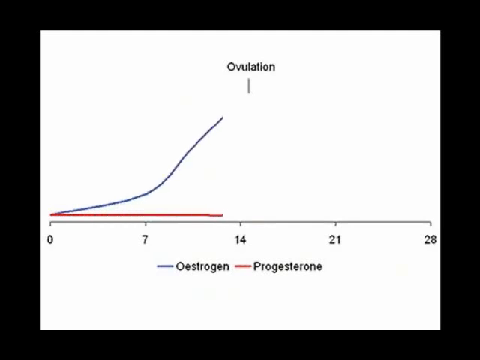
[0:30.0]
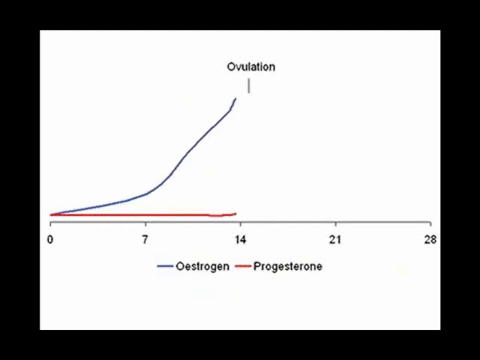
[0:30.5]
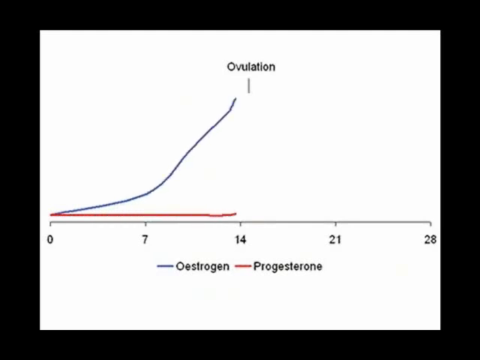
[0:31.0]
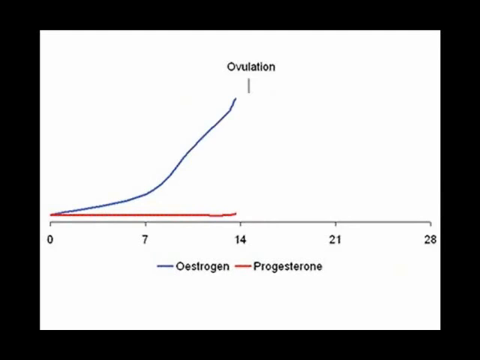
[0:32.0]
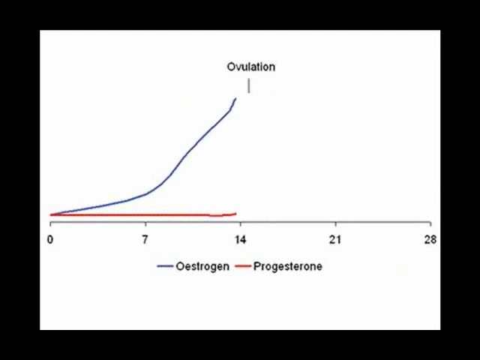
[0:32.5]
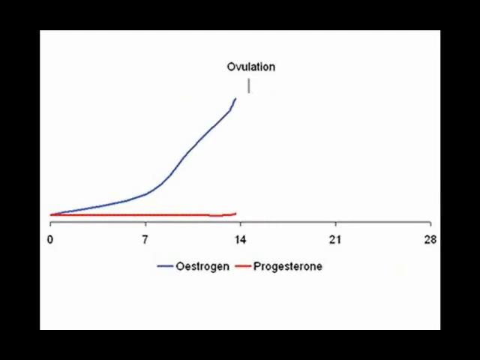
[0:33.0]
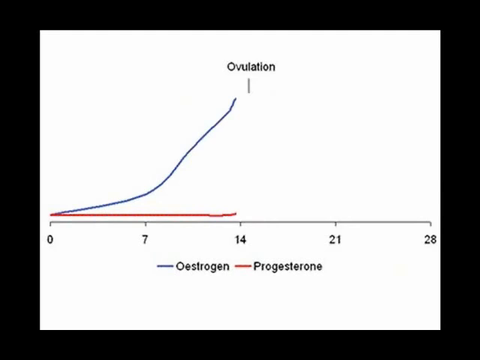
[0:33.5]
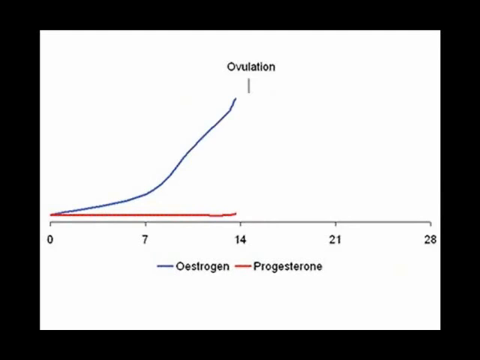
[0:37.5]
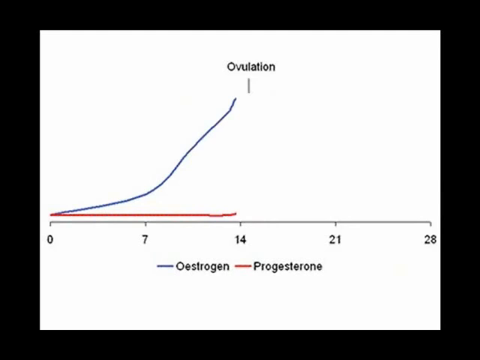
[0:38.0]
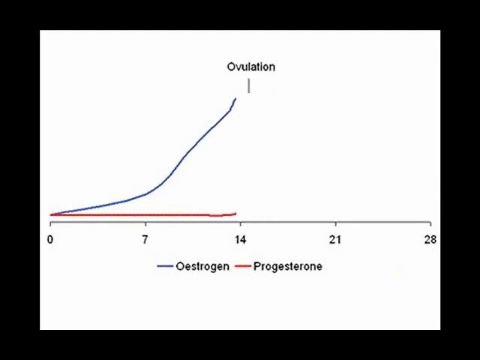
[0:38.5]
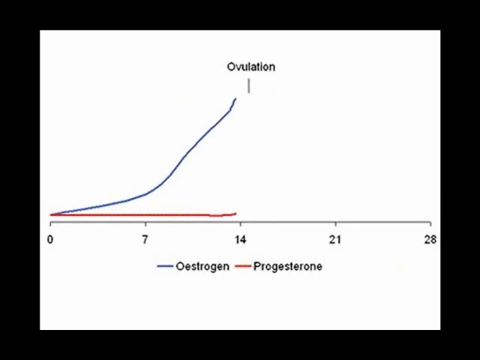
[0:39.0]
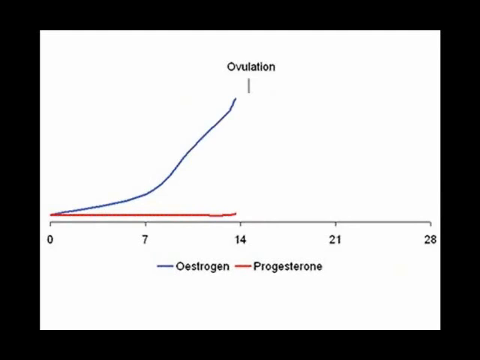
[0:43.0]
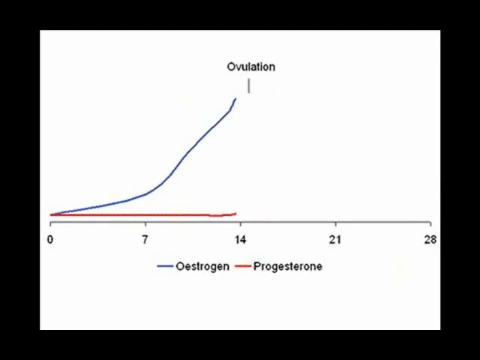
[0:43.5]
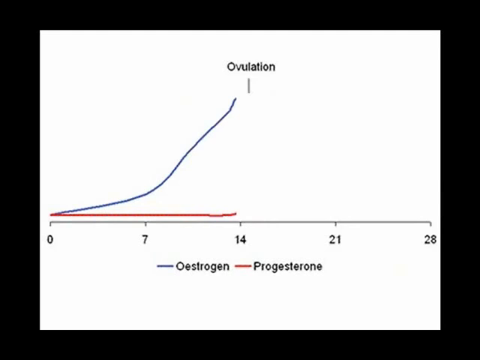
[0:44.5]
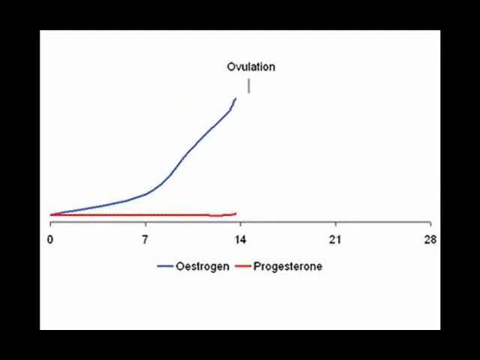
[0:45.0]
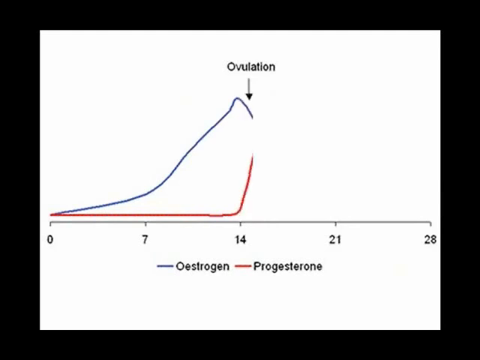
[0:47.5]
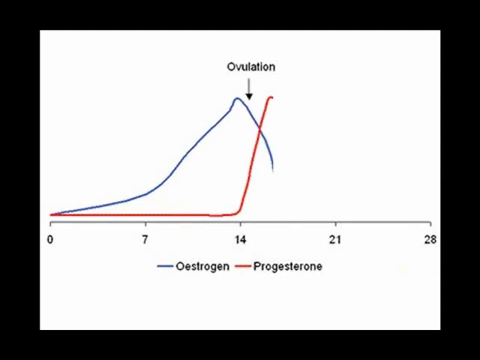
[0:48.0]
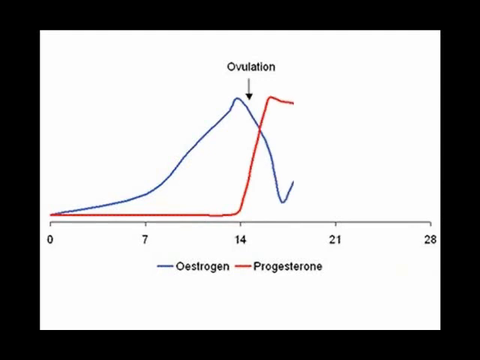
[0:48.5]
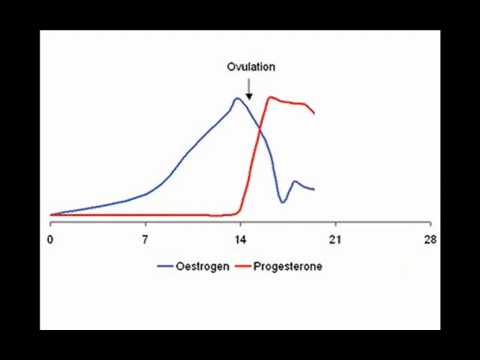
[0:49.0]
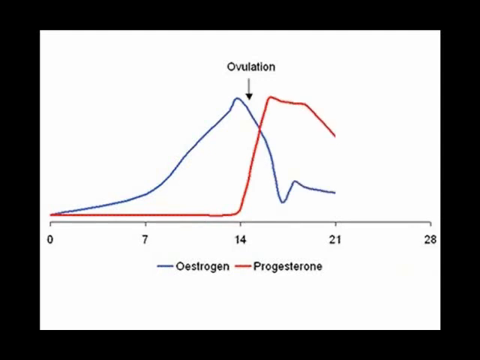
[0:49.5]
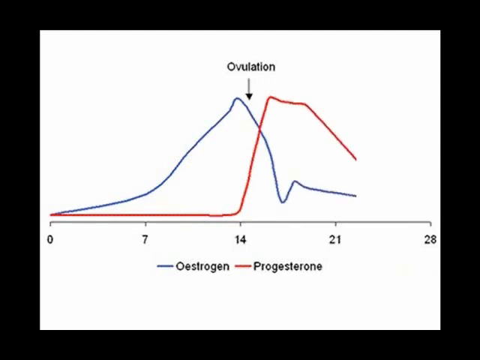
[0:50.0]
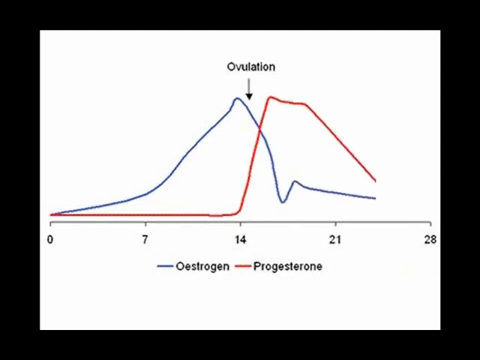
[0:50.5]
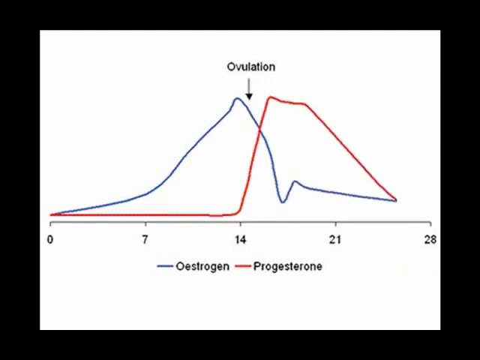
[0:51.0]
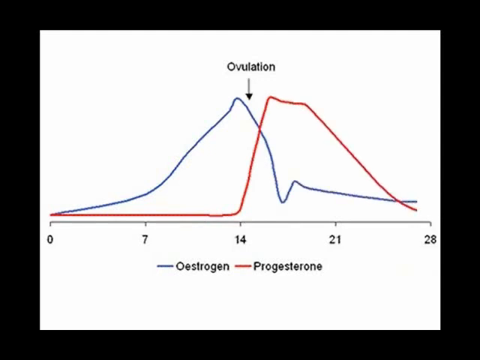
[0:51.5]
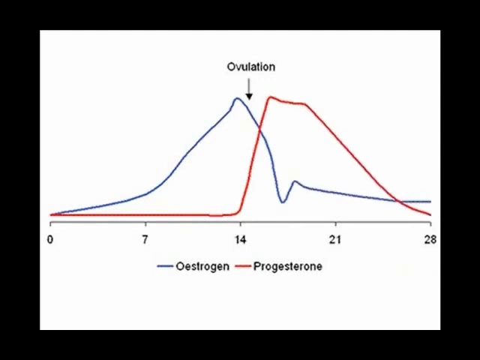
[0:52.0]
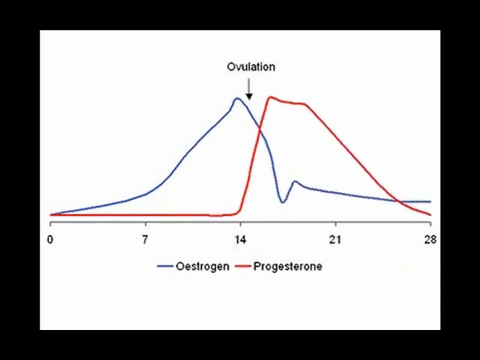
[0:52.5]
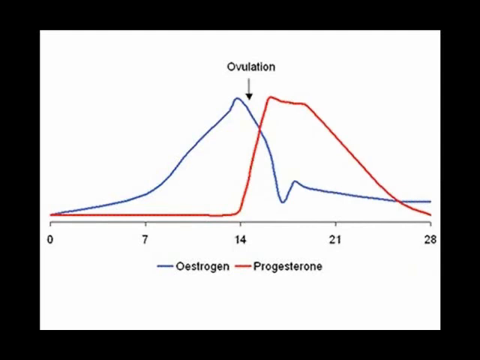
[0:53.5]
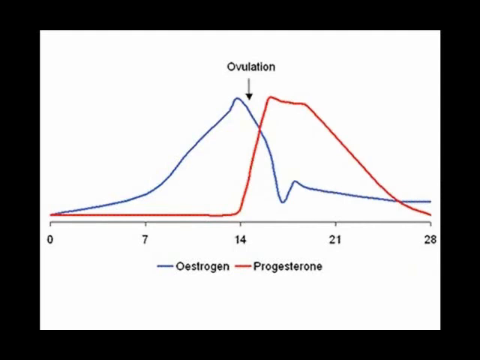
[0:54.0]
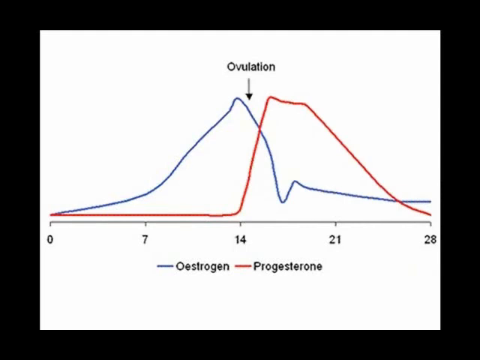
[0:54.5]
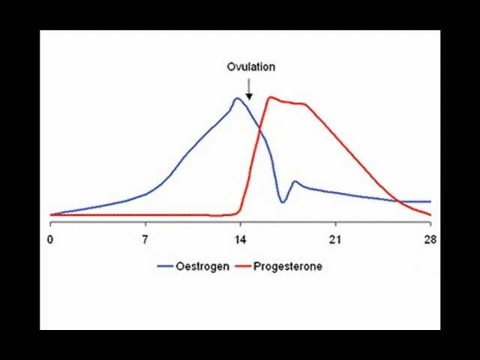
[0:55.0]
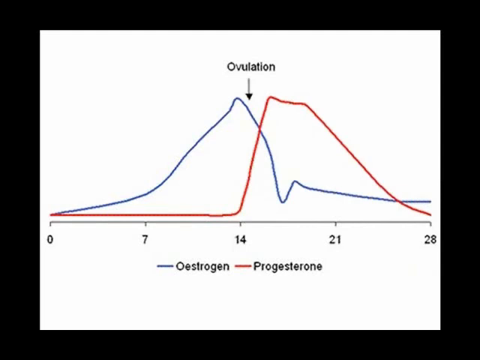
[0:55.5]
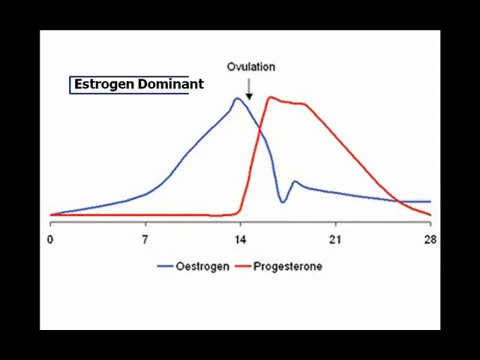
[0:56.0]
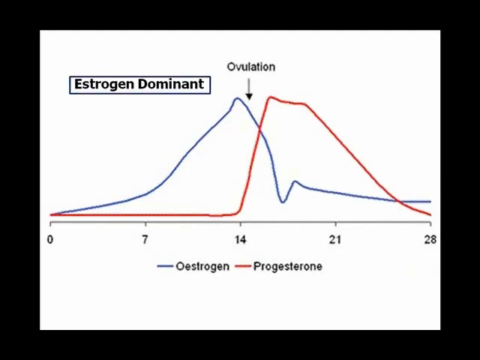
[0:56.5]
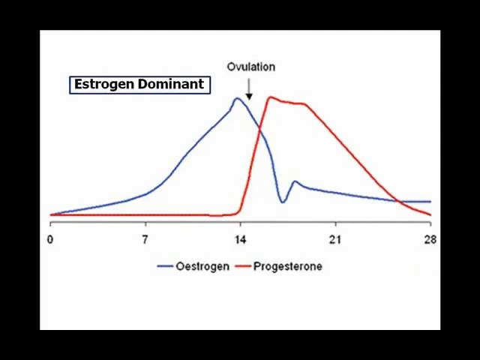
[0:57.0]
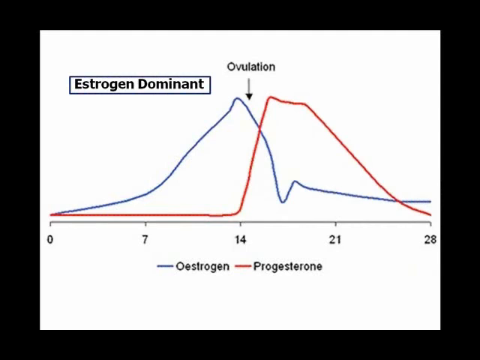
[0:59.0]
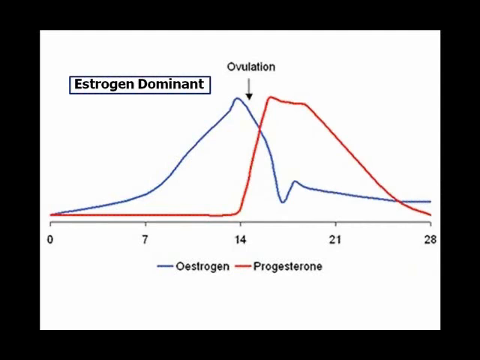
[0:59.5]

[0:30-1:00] Another slide appears. The video screen is outlined by a black frame about three quarters of an inch wide on all four sides, and the frame is wider than it is tall by maybe 2 inches. Inside it is a white slide with the word "ovulation" at the top in black letters. Beneath the word is a short vertical gray line, maybe a quarter of an inch long, with no arrows. About two-thirds of the way down, a similar gray horizontal line runs virtually the entire width of the frame, starting with the number 0 on the left and ending with 28 on the right. Equally spaced markings along it read 0, 7, 14, 21 and 28.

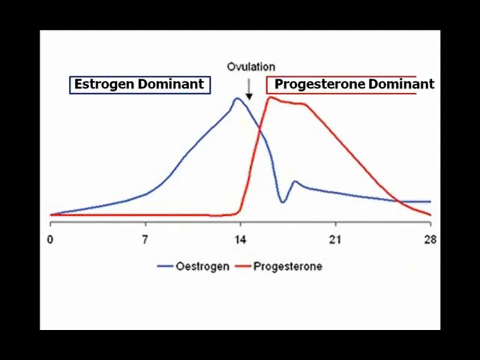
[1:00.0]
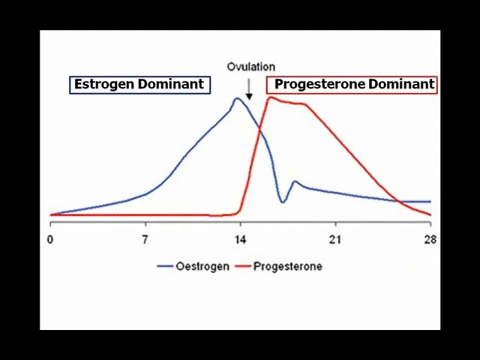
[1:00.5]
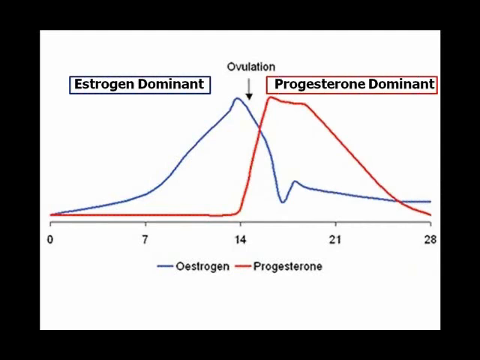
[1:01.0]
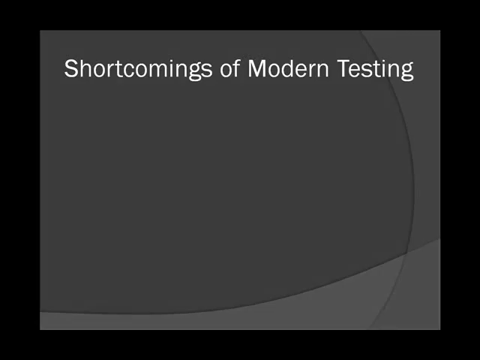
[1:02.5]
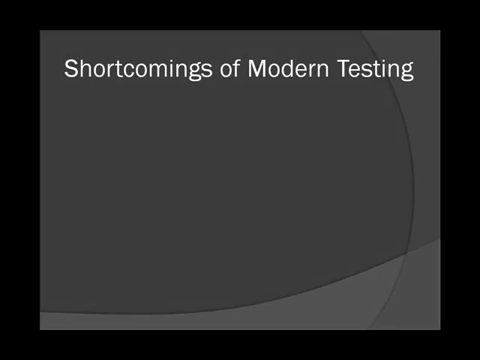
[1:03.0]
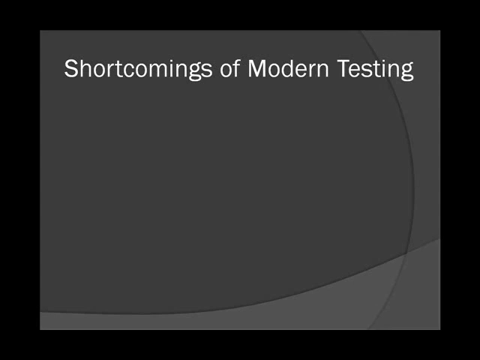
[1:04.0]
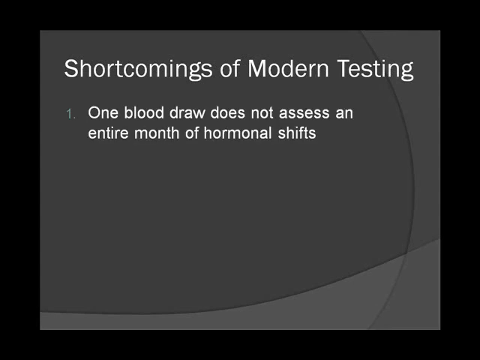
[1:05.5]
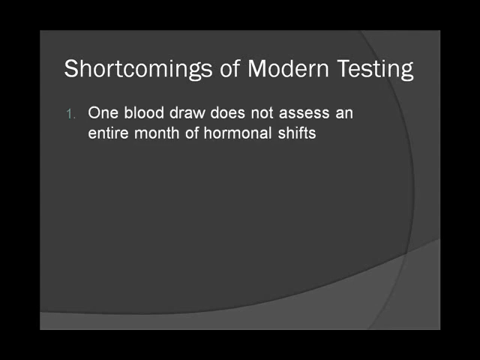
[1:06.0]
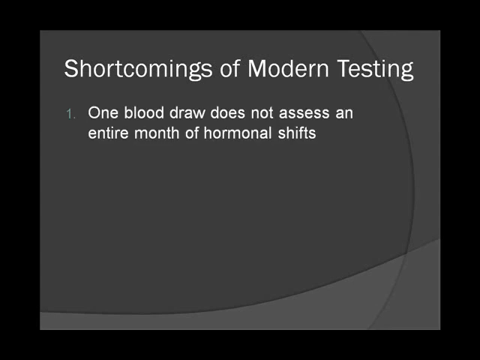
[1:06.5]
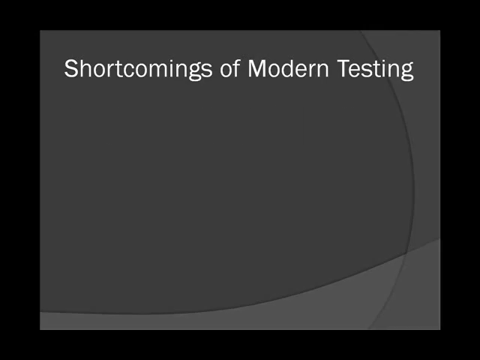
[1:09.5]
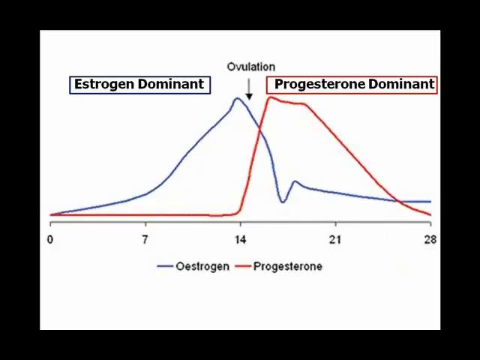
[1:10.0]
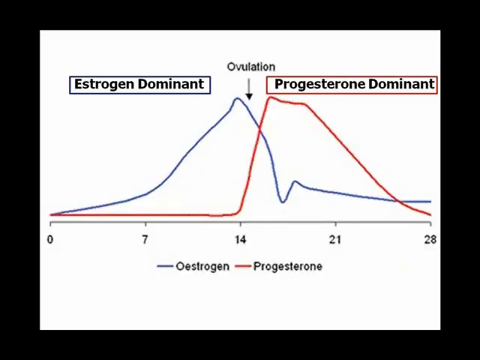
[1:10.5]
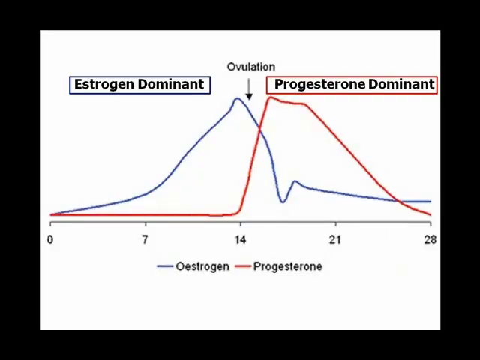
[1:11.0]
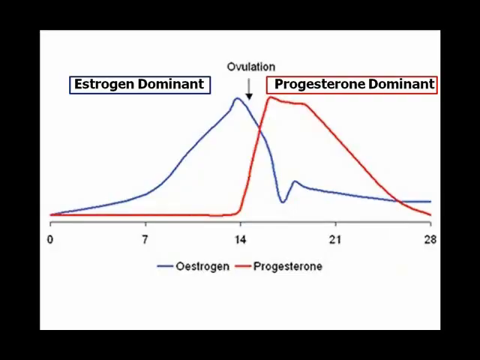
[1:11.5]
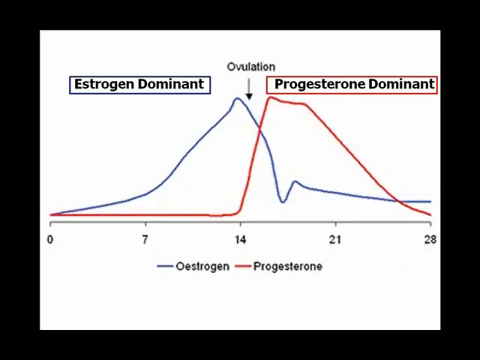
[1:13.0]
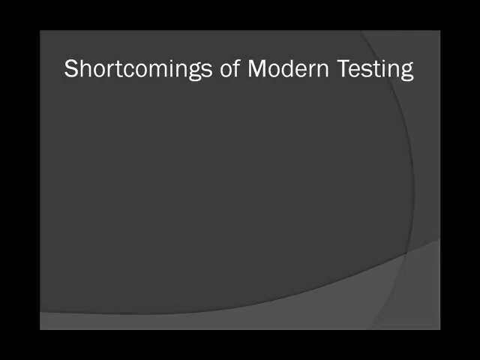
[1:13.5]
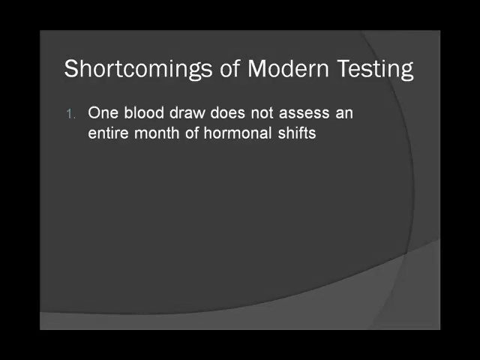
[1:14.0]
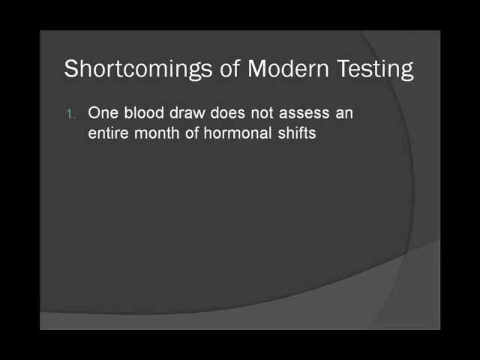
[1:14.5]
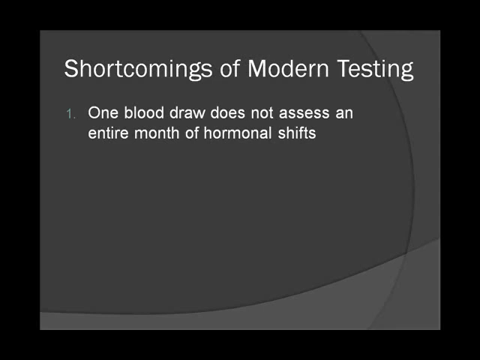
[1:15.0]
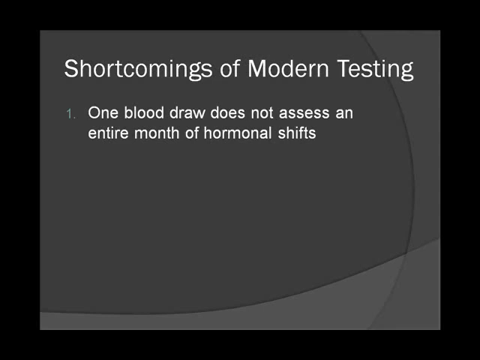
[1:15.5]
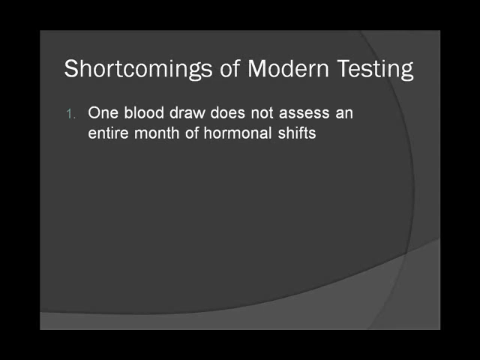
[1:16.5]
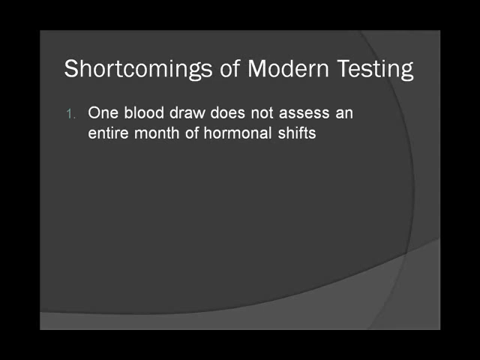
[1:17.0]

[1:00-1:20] A similar setup follows: a black outer frame, wider than it is tall, thicker on the sides than at the top and bottom. In the middle is another slide with the word "ovulation" at the top, but now the vertical line beneath it has an arrow tip at its lower end; the line is gray and the arrow tip is black. To the left of the line, in a rectangular box outlined in gray, are the words "estrogen dominant". To the right, in a partial rectangle that does not close at one end because it comes too close to the side of the frame, are the words "progesterone dominant"; the outline of this right-hand box is red. The fully enclosed rectangle is black. Beneath the two labels is a graph of lines: the line matching "progesterone dominant" is red, and the line matching "estrogen dominant" is blue.